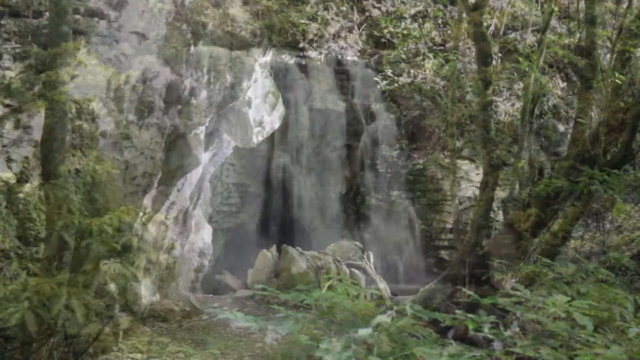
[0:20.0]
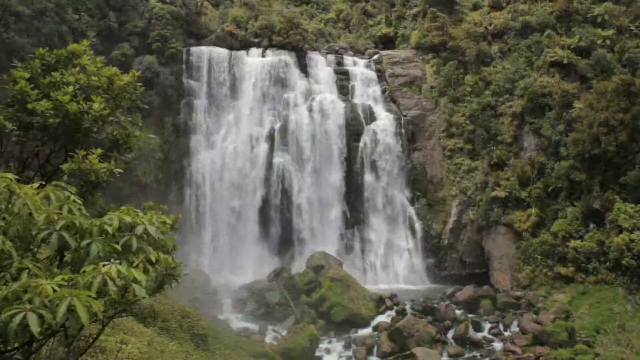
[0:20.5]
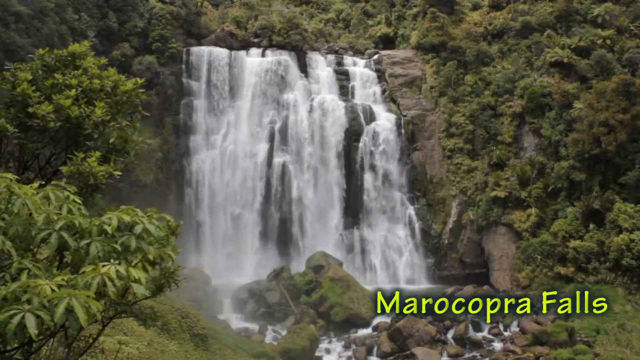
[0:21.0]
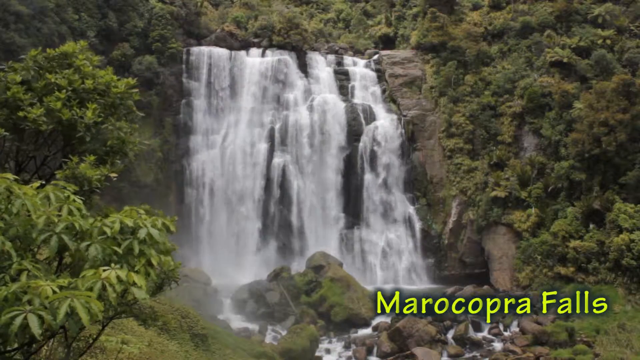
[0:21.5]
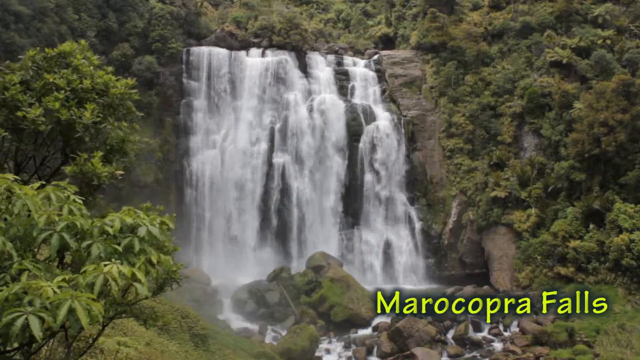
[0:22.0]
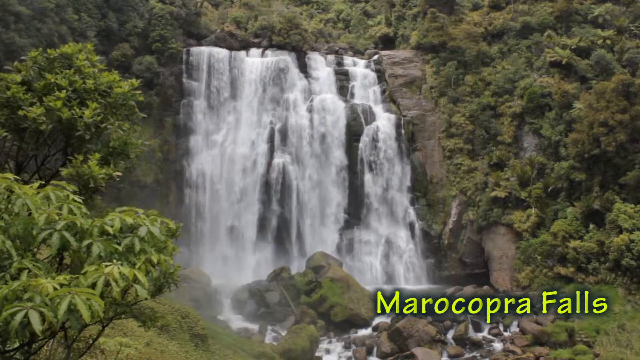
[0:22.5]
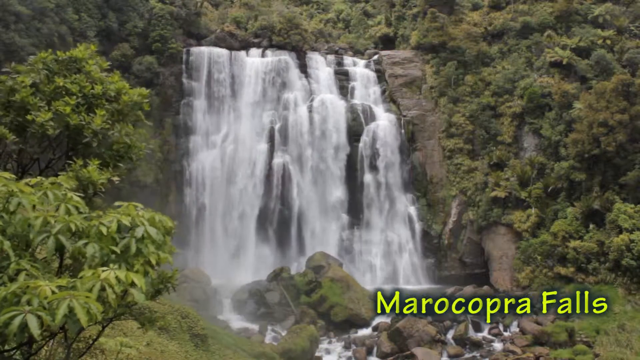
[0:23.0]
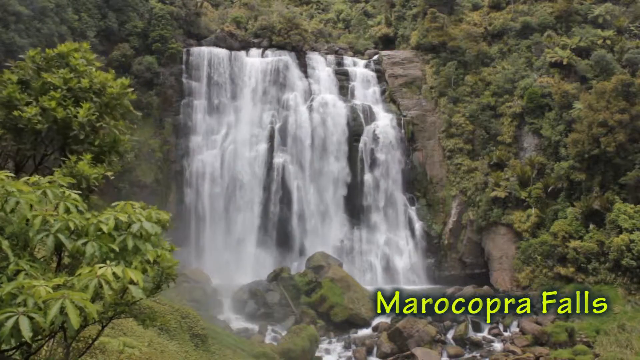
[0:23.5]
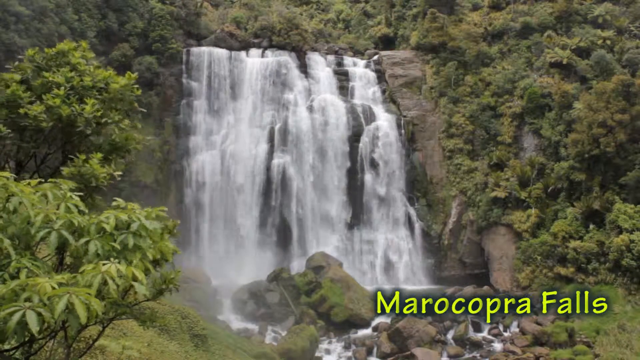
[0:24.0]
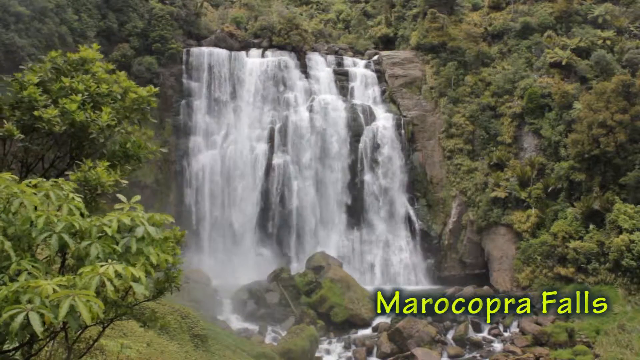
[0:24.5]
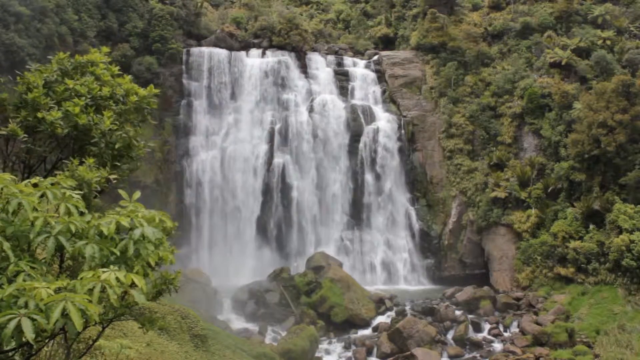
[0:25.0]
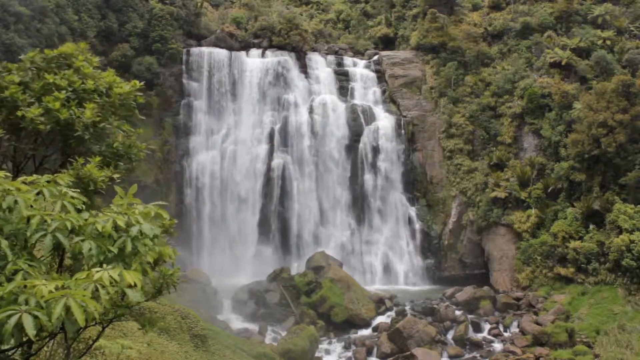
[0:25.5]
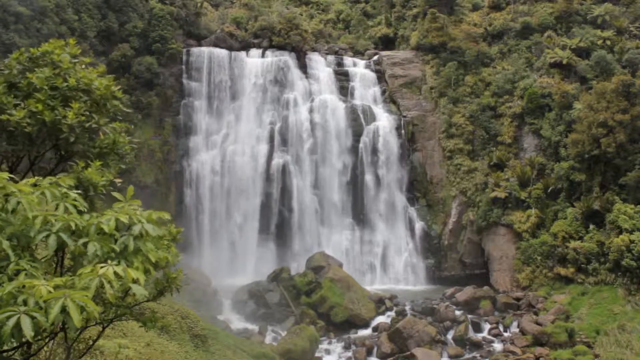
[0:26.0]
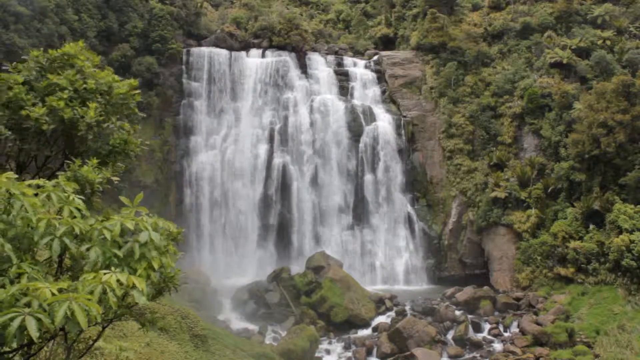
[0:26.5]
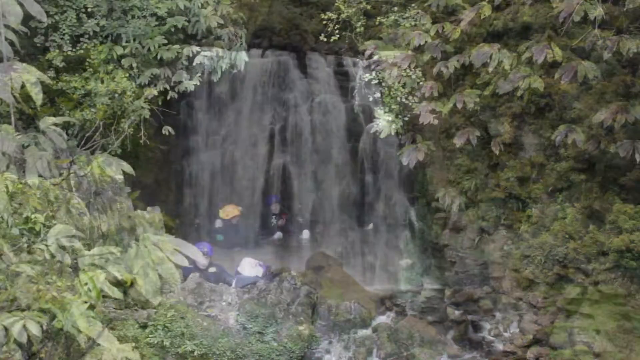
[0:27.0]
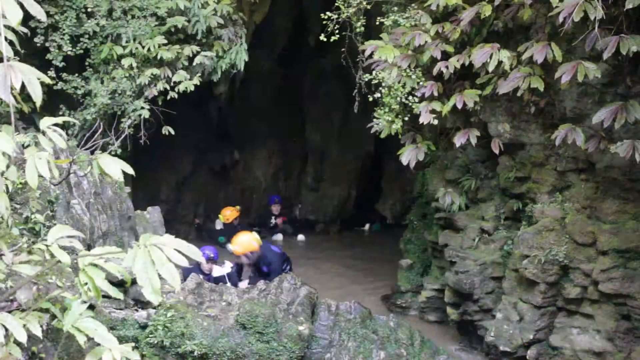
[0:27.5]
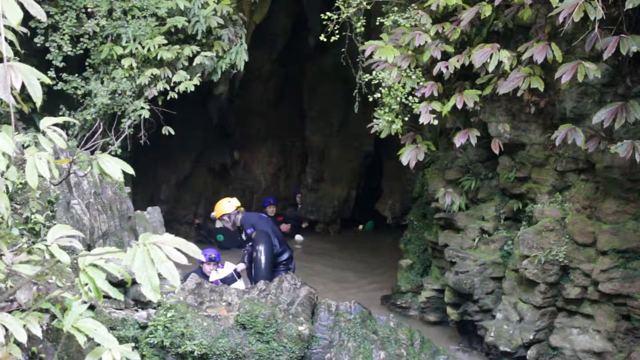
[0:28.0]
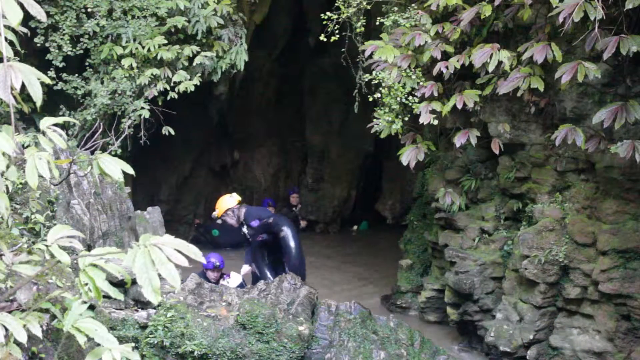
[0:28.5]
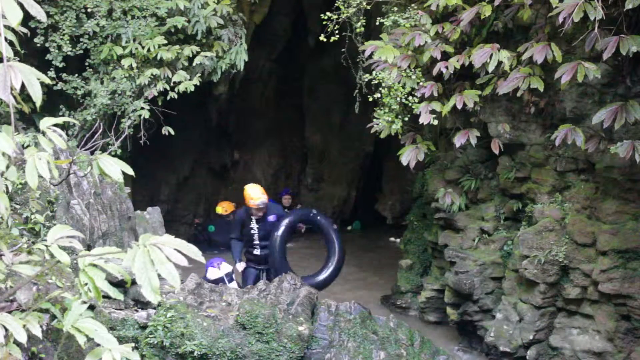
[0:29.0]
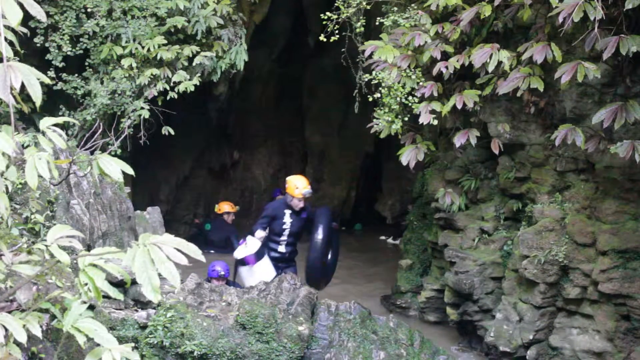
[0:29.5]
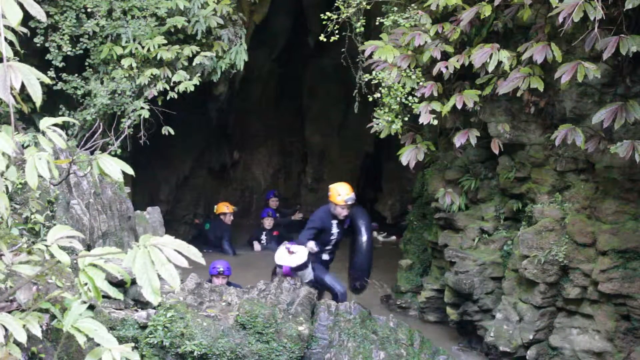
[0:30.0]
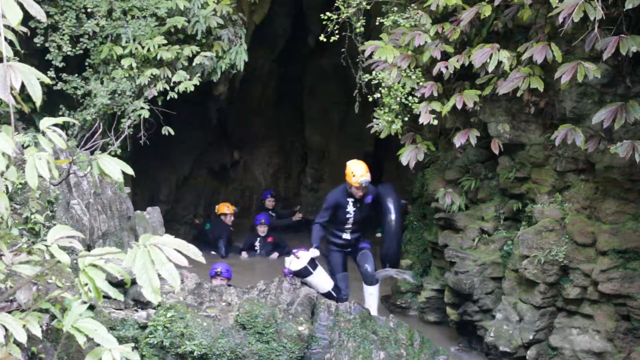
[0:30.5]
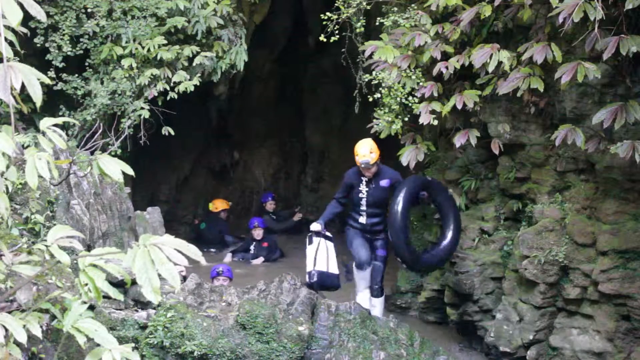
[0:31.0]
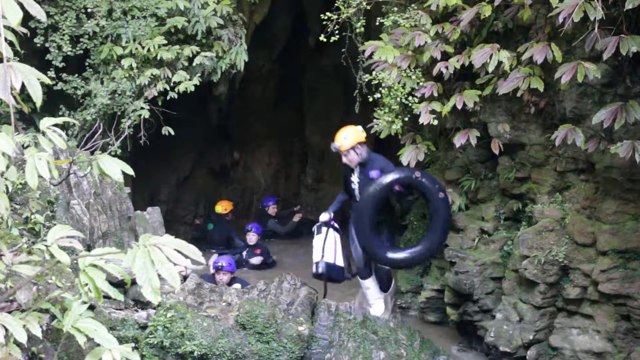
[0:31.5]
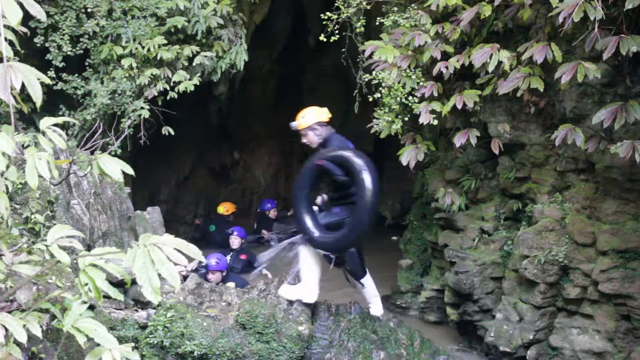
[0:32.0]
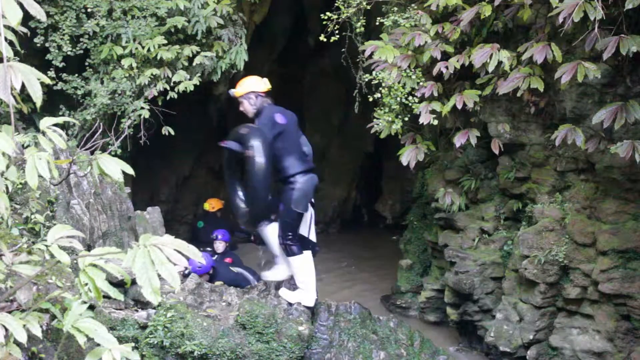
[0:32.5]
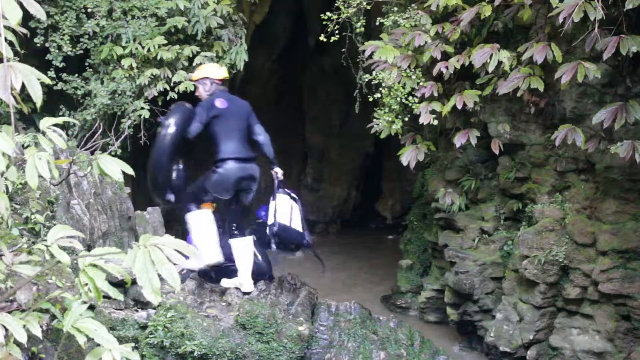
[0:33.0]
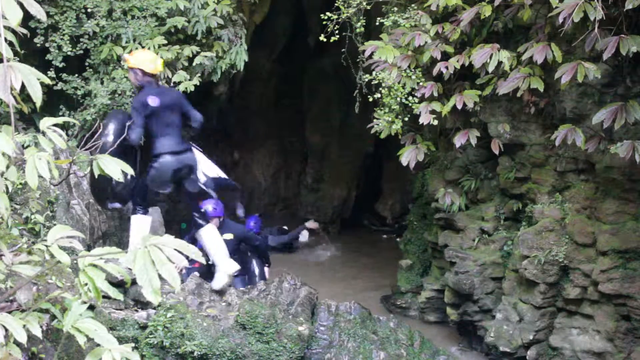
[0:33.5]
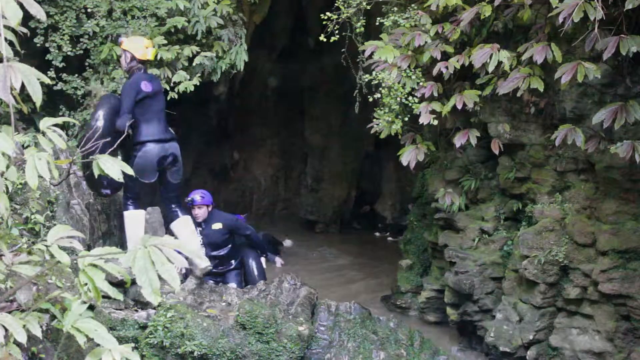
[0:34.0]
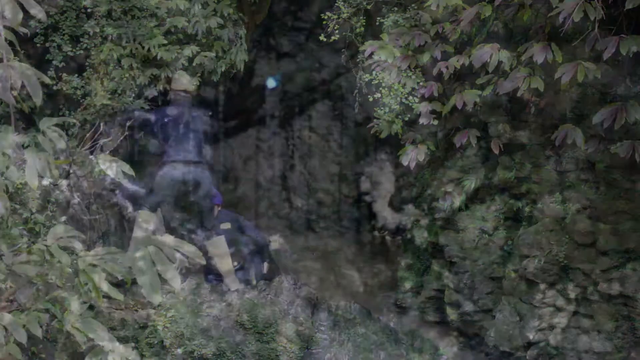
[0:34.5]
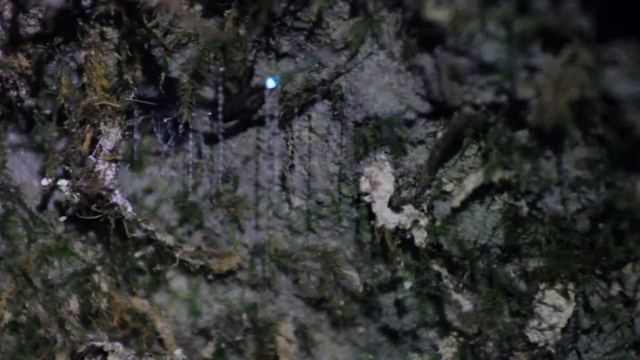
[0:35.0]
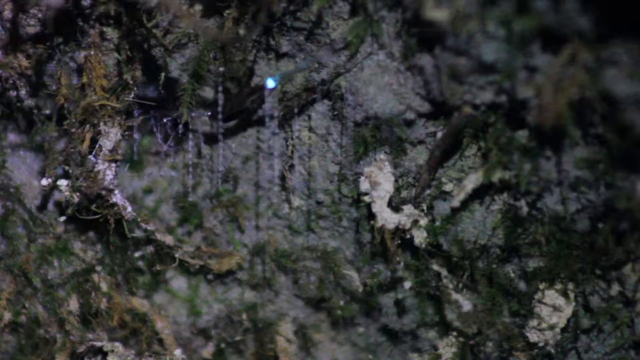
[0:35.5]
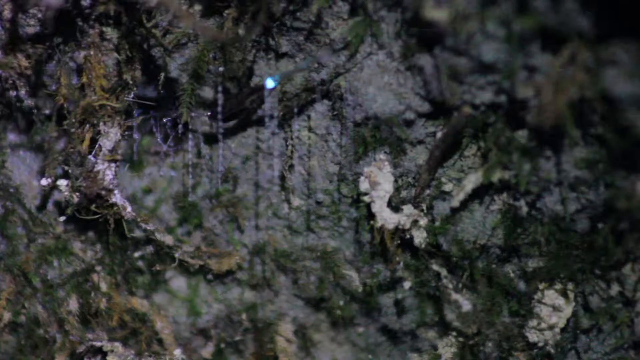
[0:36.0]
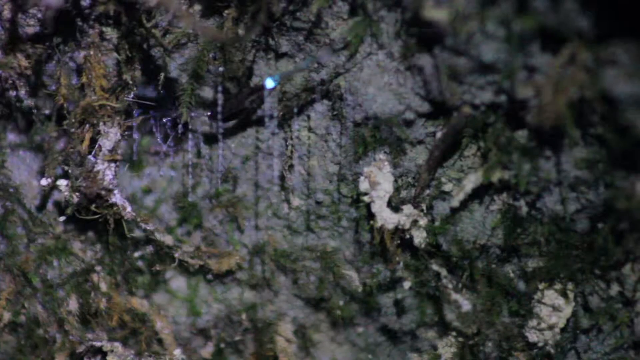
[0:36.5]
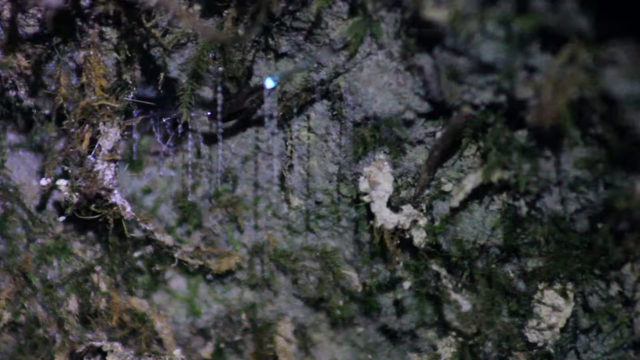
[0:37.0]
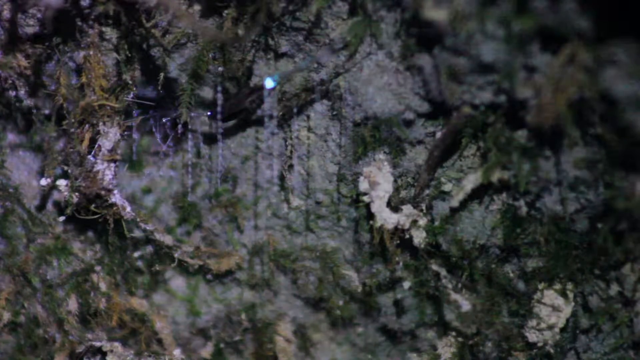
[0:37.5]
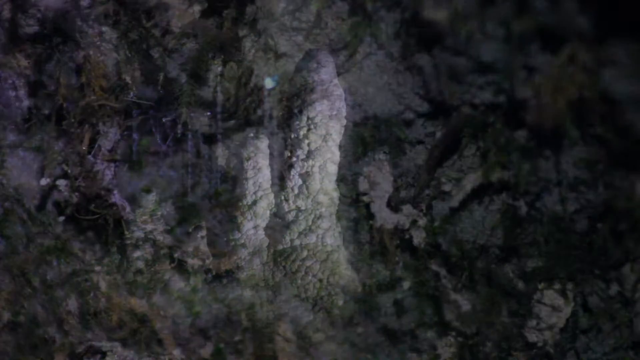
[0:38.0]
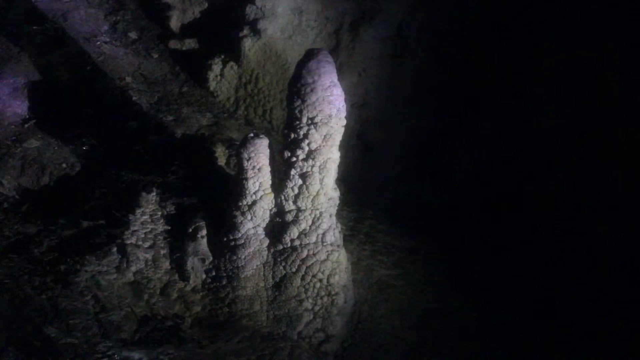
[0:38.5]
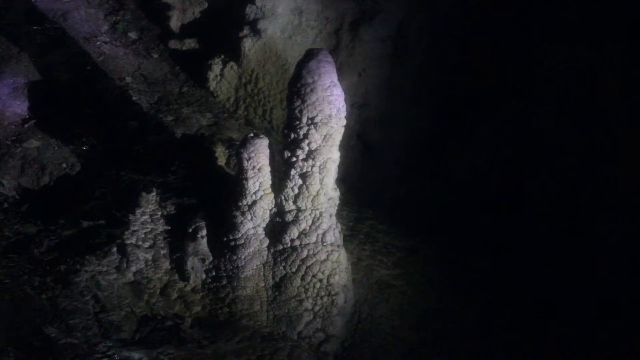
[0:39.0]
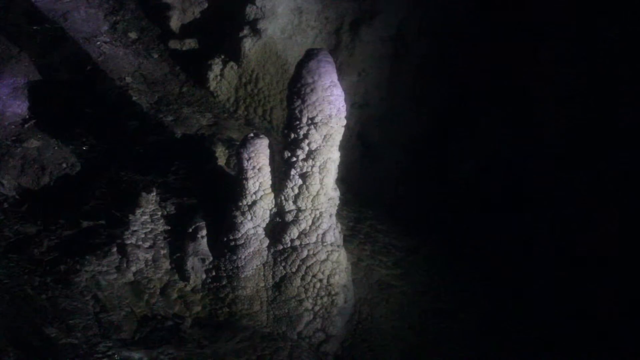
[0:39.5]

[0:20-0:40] A waterfall appears, with words in the bottom right reading "Marocopera Falls". The waterfall streams white water down. Two jagged rocks sort of peek out and partially split the waterfall, so it looks like two halves, the left half about three times wider than the right. The scene switches to a group of people in the water in a small cave, perhaps nearby. They wear swimming gear and have inflatable tubes and shoes that look water-resistant, all submerged in the water as they climb out. Then the view shows the inside of a cave, perhaps the one the swimmers came from. It is poorly lit, with basically no light other than the camera light.